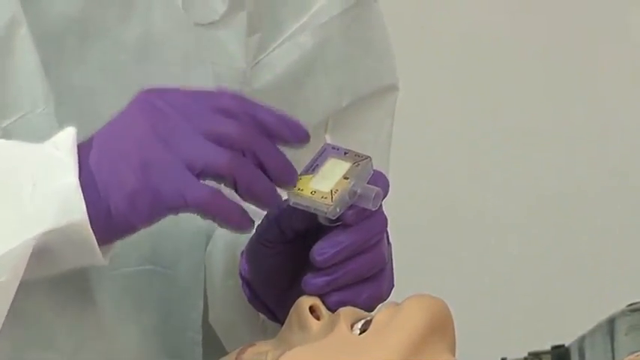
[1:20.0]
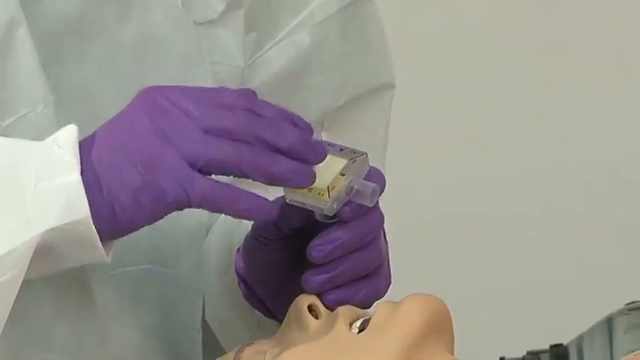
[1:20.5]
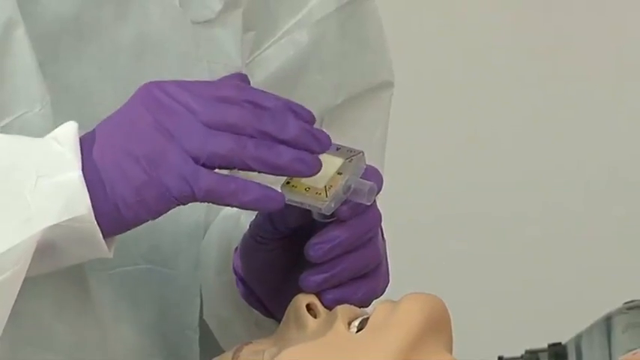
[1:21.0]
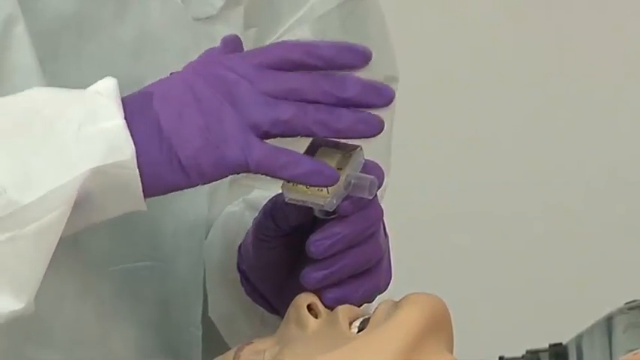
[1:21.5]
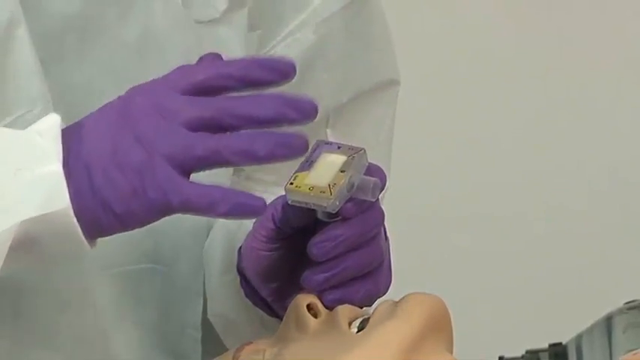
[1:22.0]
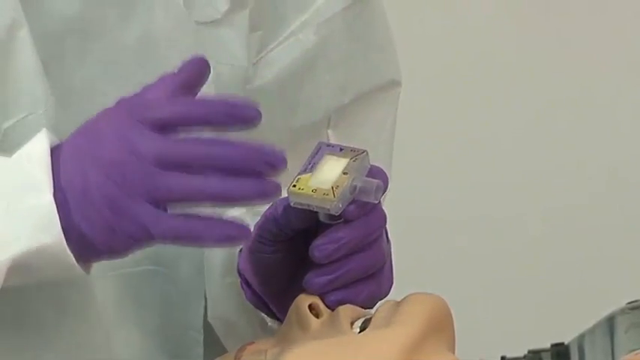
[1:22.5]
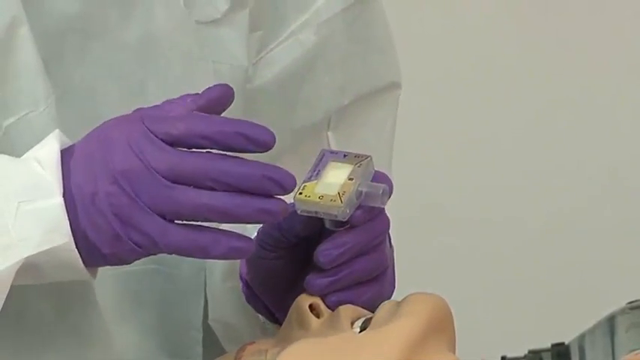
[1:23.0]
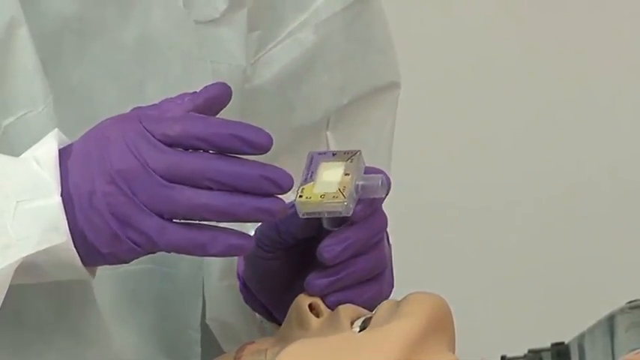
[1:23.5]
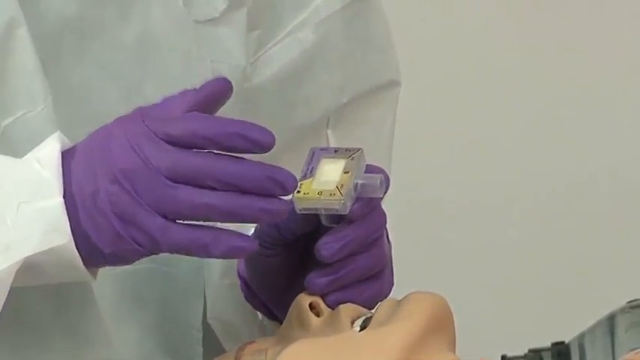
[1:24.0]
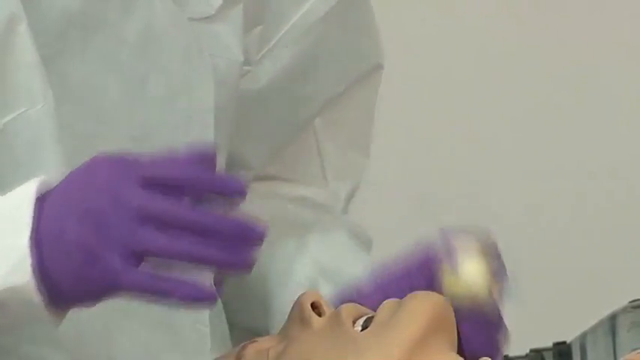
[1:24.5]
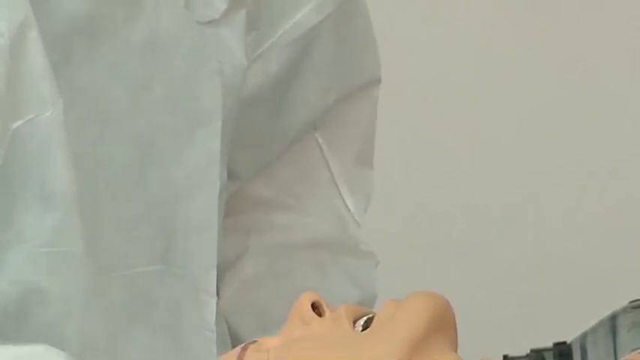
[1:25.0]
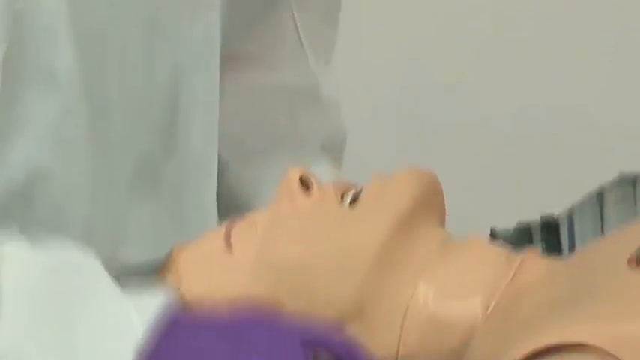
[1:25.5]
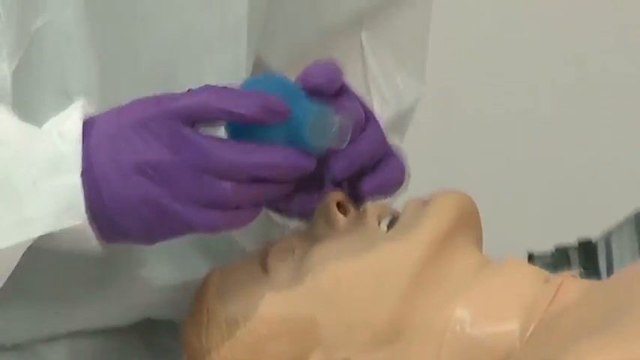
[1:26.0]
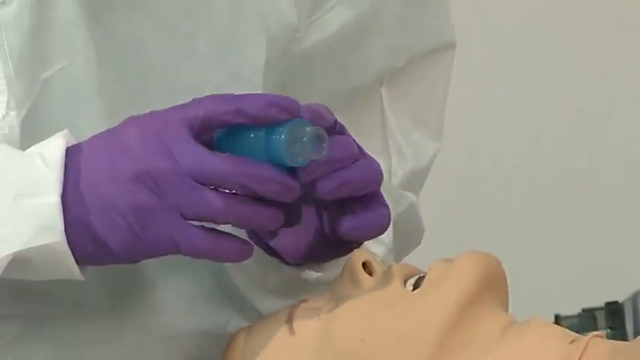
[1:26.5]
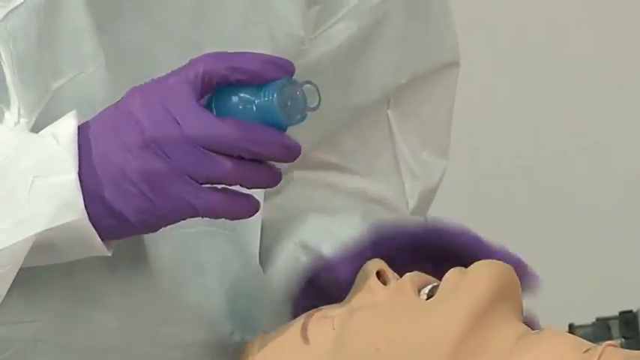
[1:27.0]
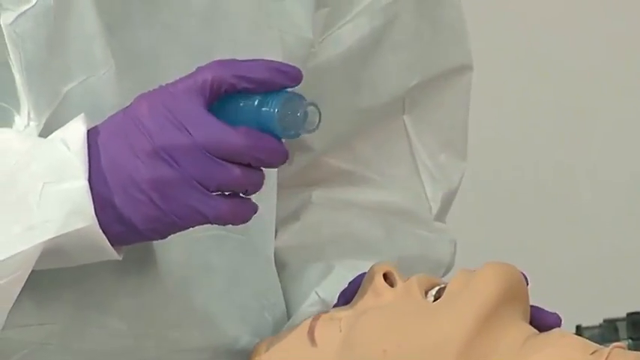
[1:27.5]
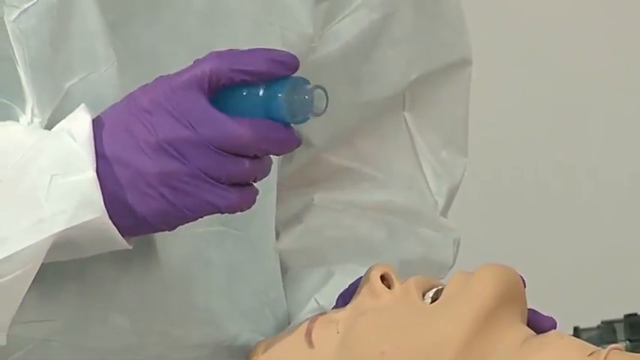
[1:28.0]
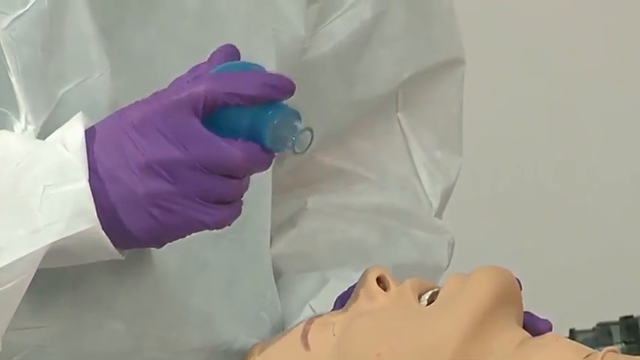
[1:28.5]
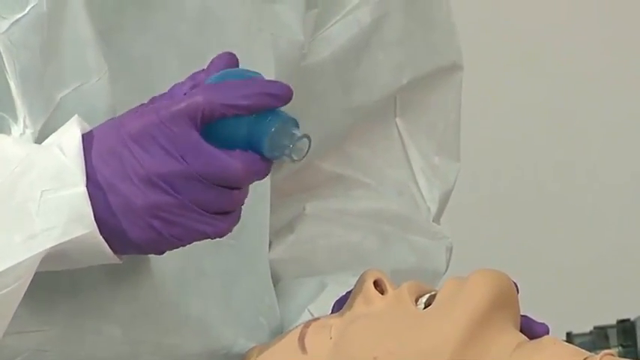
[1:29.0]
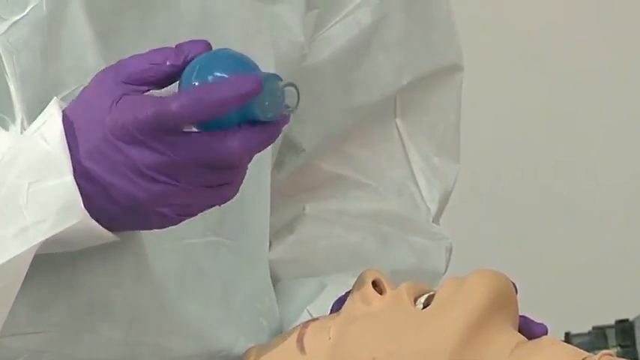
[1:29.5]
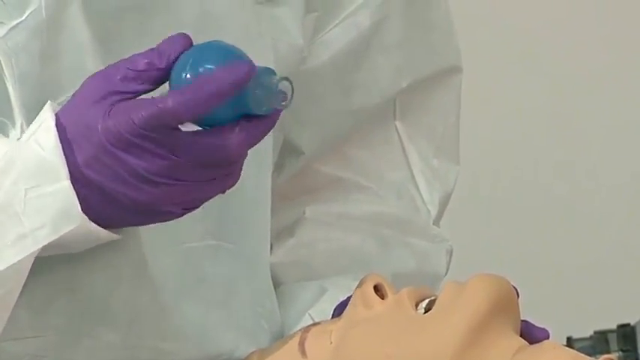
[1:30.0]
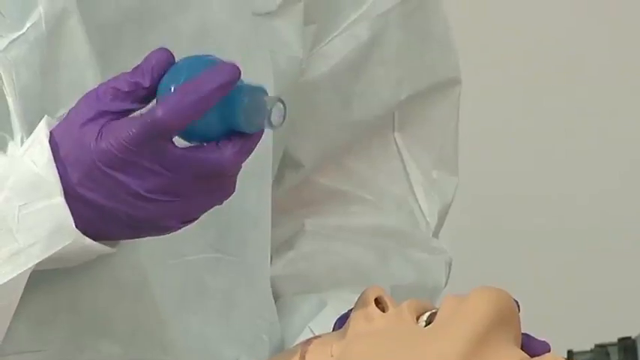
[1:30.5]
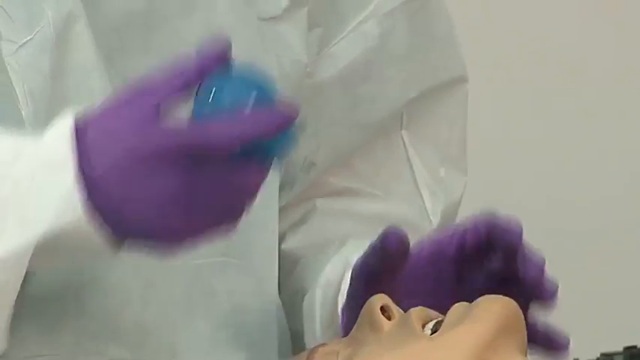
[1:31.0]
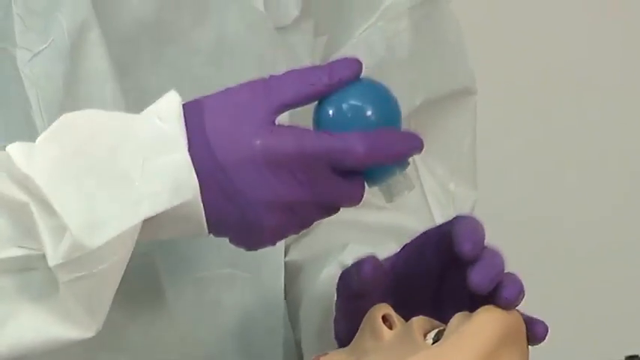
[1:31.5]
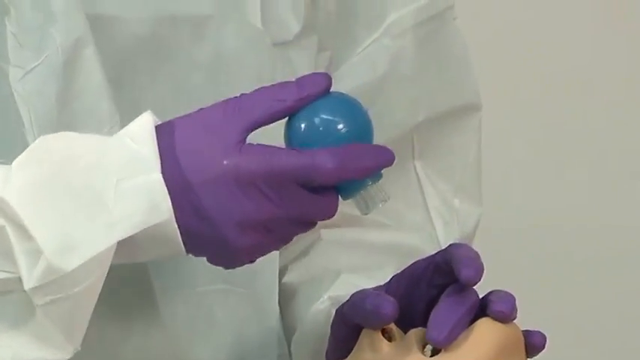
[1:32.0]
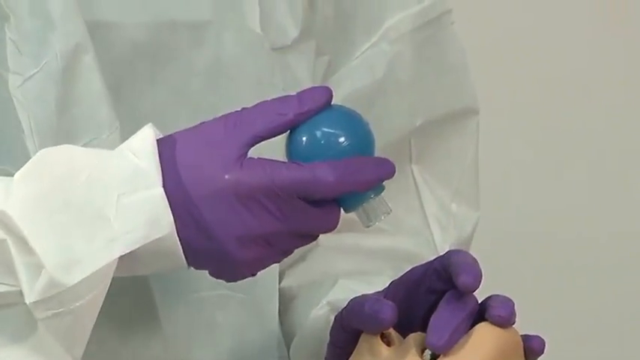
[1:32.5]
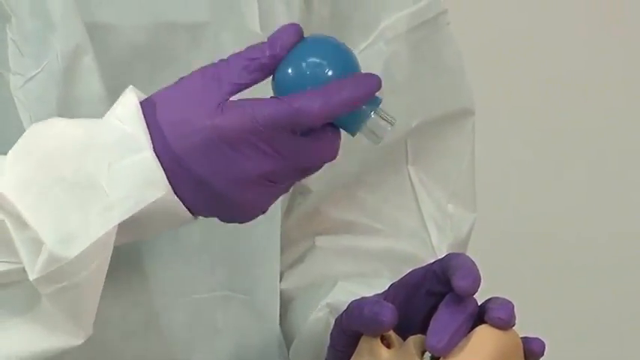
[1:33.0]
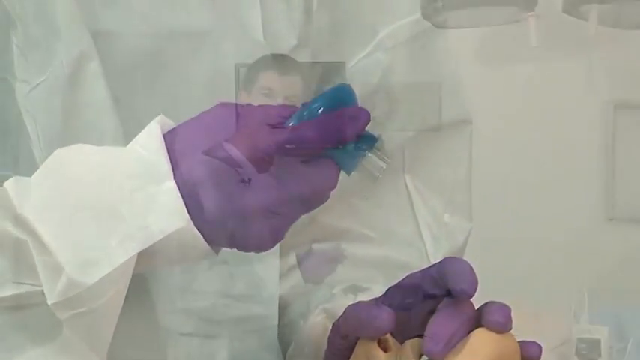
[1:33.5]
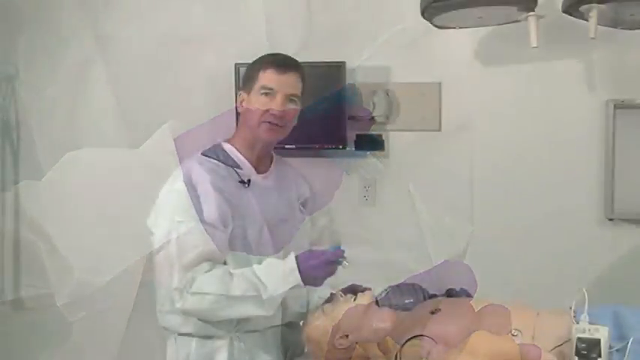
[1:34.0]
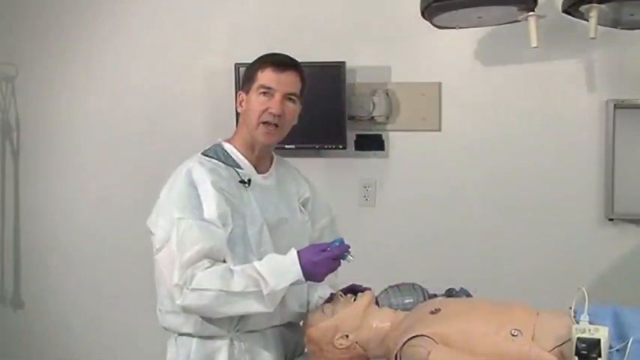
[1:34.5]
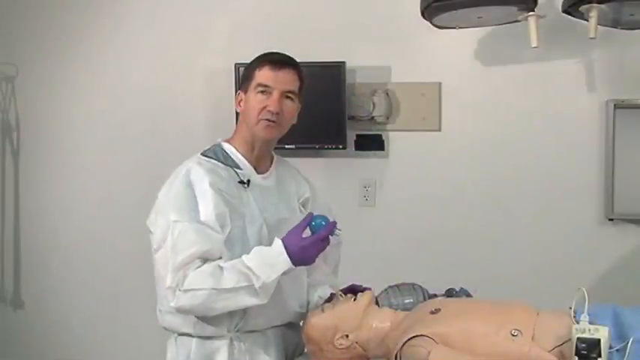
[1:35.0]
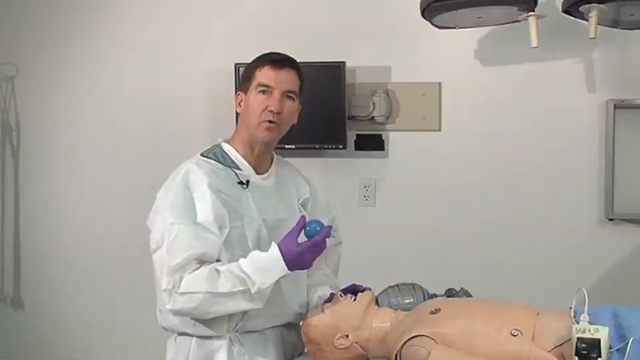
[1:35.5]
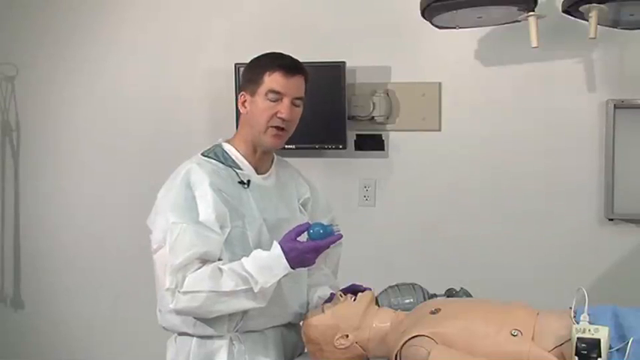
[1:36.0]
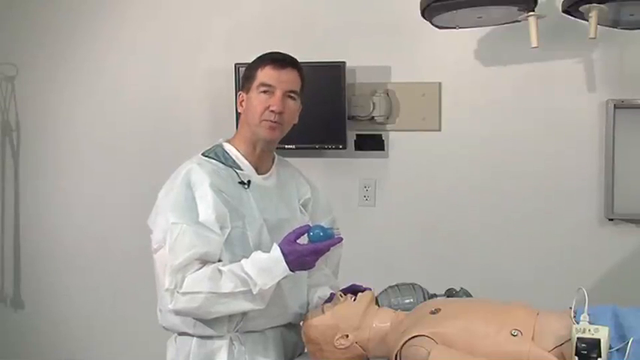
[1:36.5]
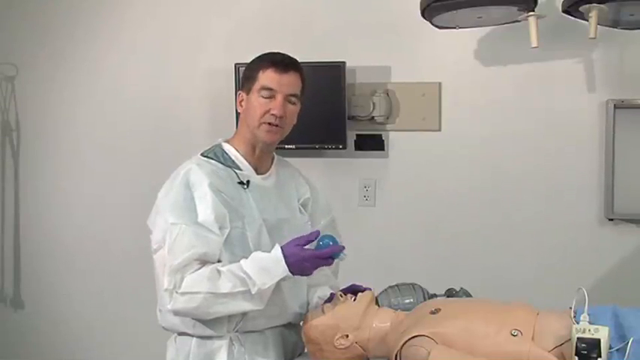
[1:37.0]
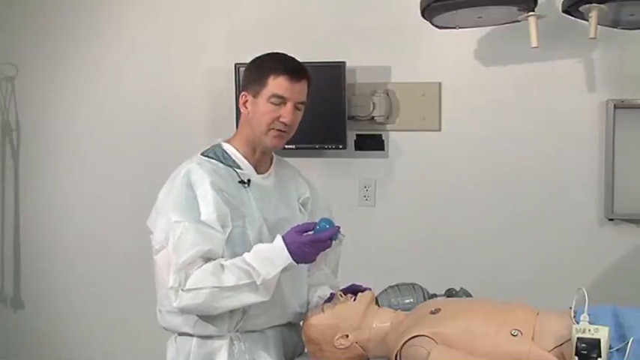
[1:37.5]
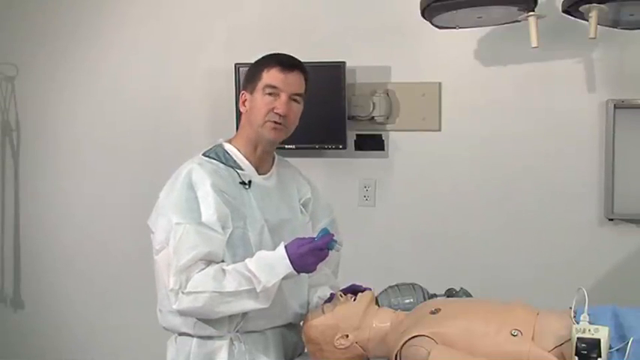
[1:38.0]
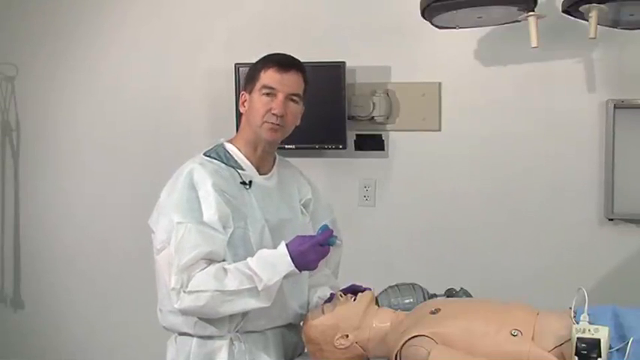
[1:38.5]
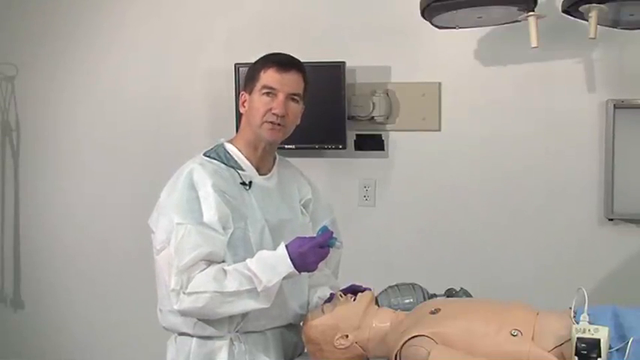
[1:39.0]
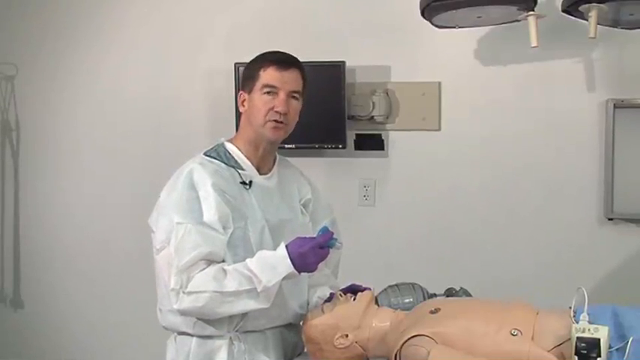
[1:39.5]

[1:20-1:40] A doctor wearing a white gown and purple gloves stands by a mannequin lying flat with its mouth open. He has a piece of equipment with what looks to be a little hole in it, so it kind of looks like some kind of aeration device. He moves his gloved hand as if explaining. The camera goes down, and he now holds a blue thing that kind of resembles a light bulb, demonstrating or motioning how the device is used. It is squishy, as he pushes it in. The camera then transitions to the full room with him and the mannequin, and he continues to explain and squeezes the blue object.